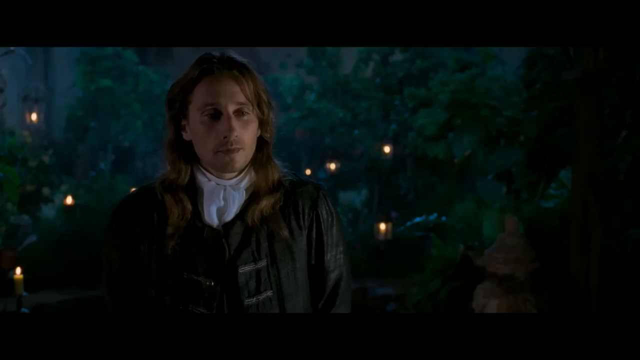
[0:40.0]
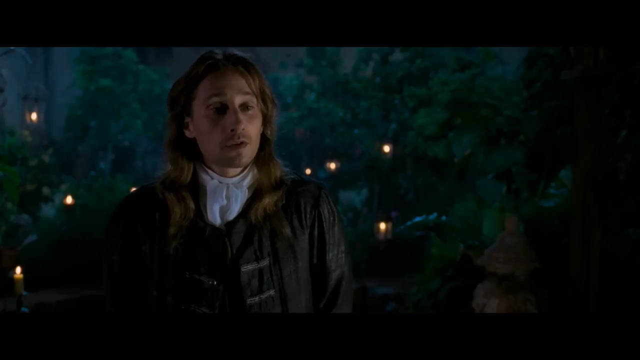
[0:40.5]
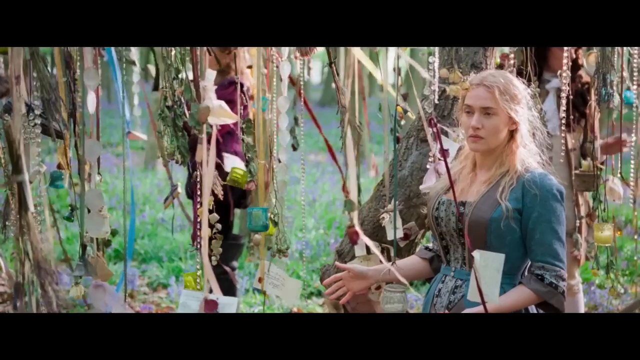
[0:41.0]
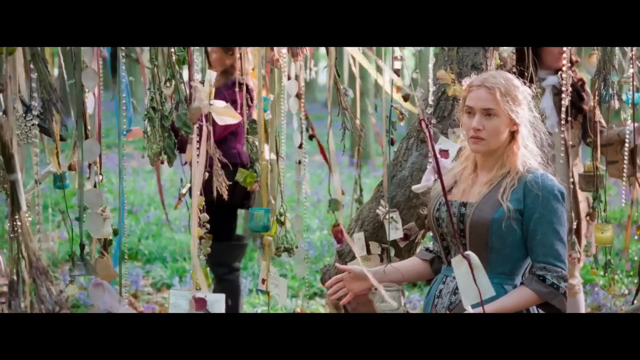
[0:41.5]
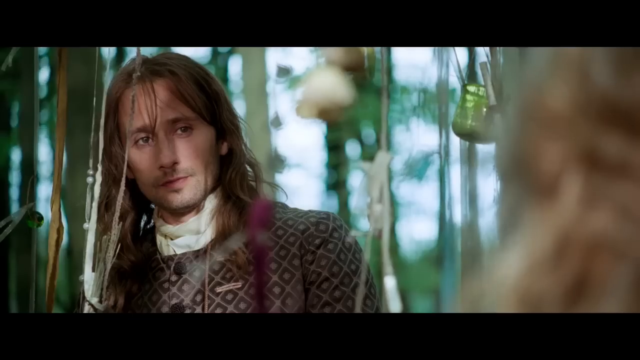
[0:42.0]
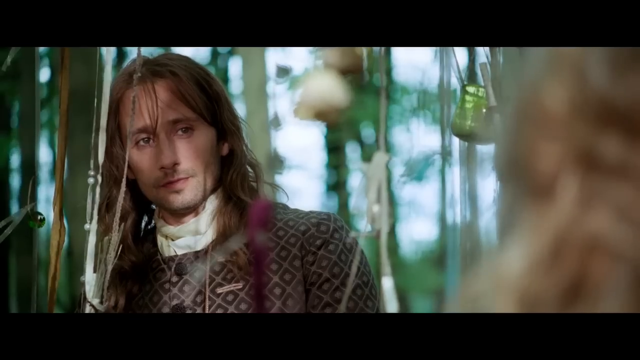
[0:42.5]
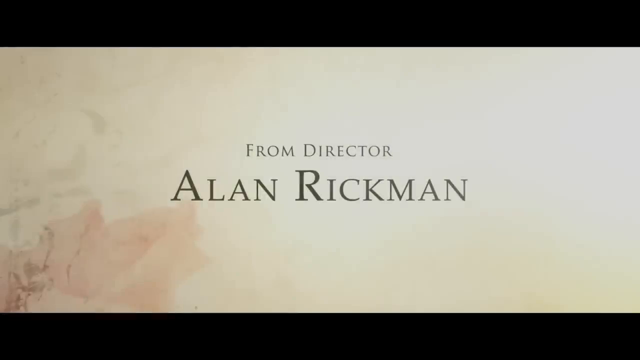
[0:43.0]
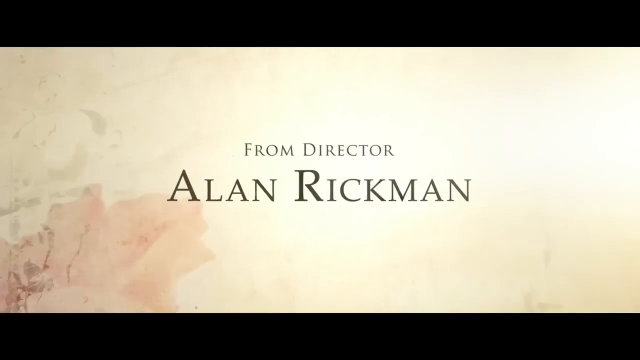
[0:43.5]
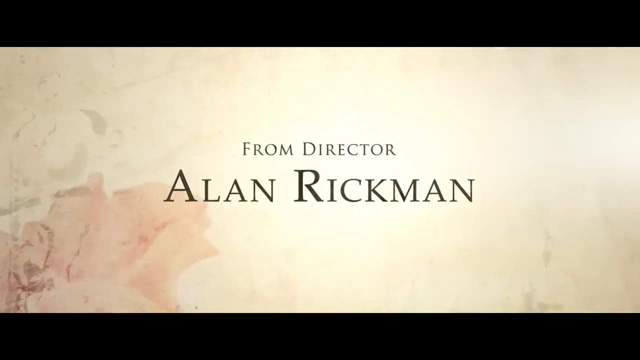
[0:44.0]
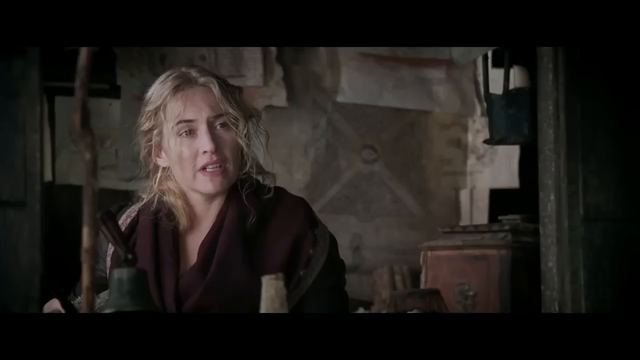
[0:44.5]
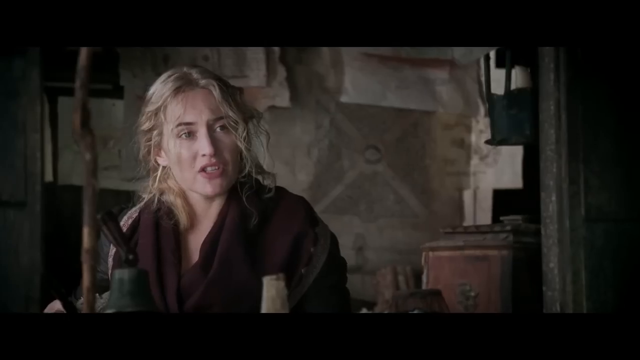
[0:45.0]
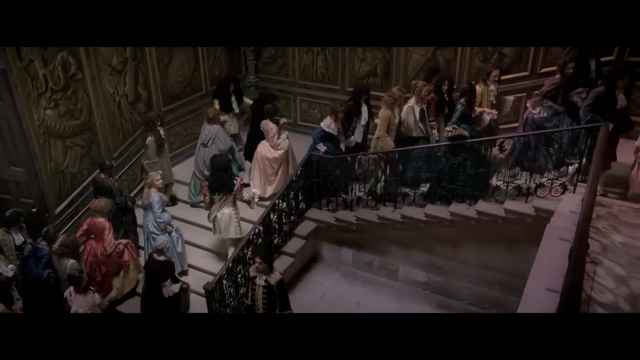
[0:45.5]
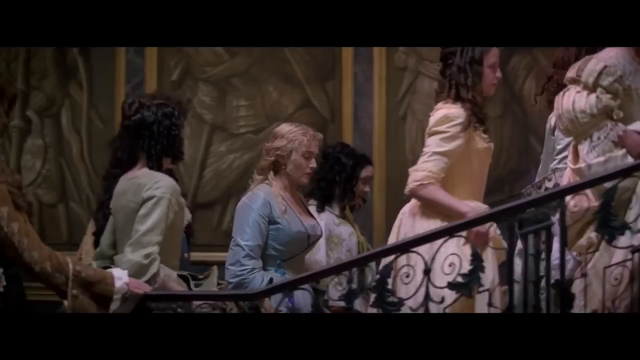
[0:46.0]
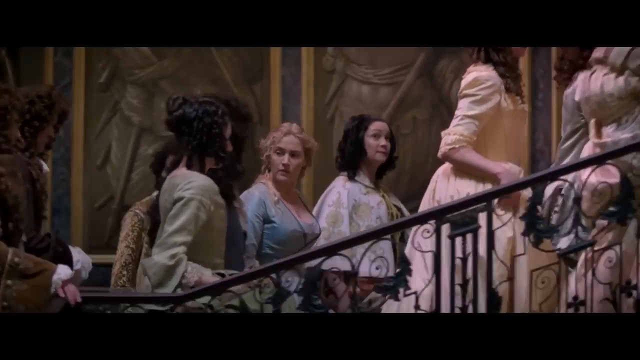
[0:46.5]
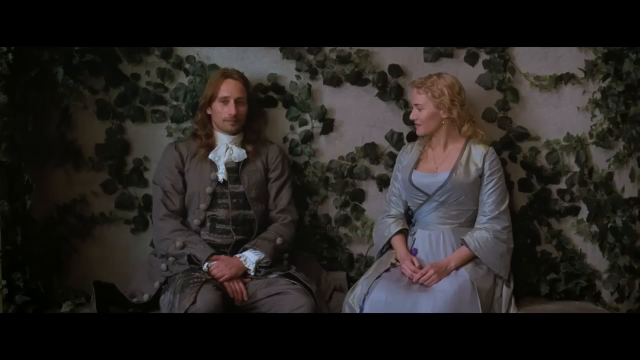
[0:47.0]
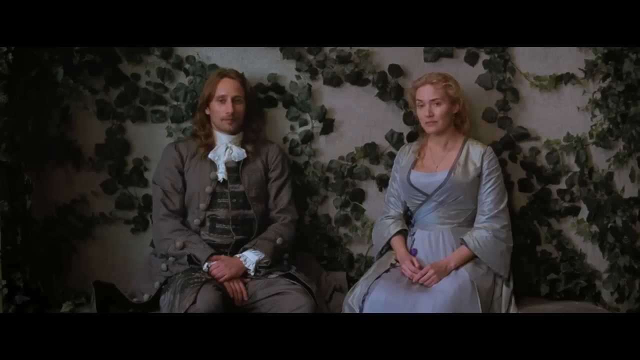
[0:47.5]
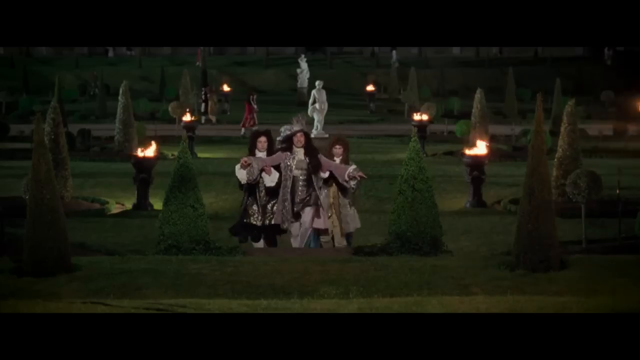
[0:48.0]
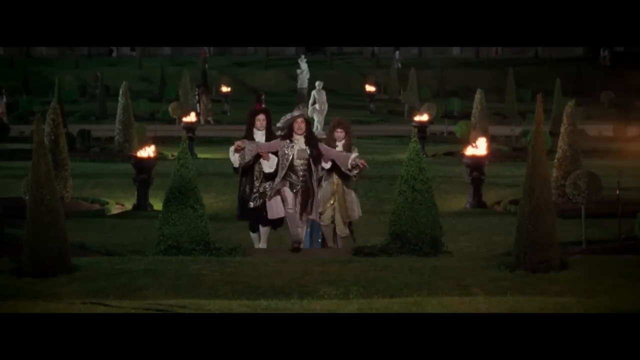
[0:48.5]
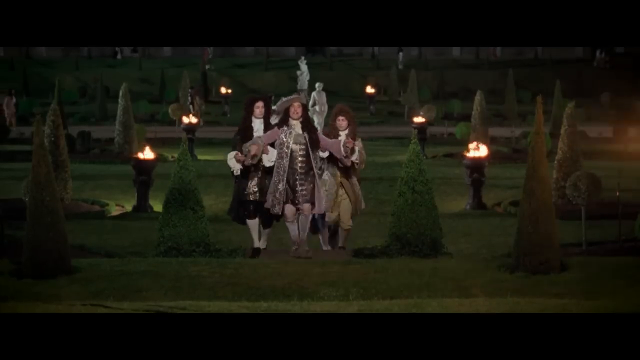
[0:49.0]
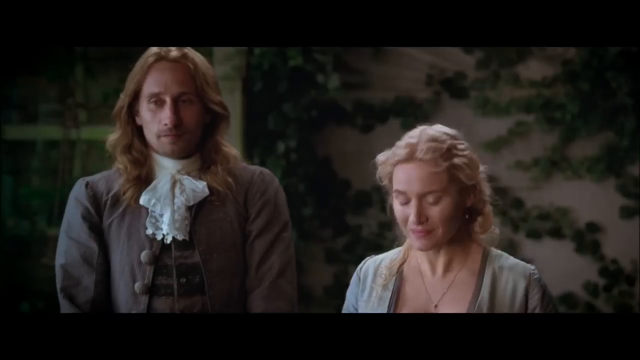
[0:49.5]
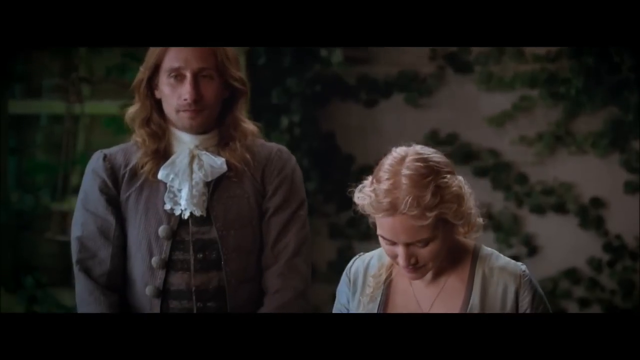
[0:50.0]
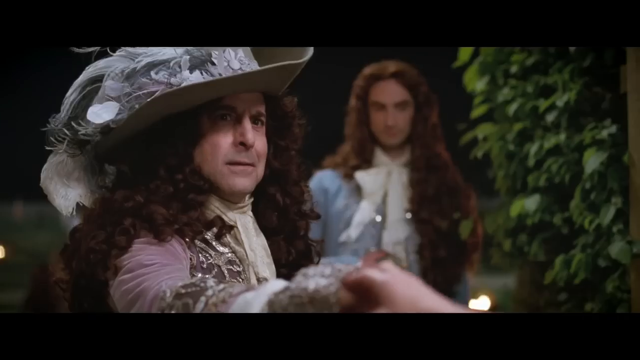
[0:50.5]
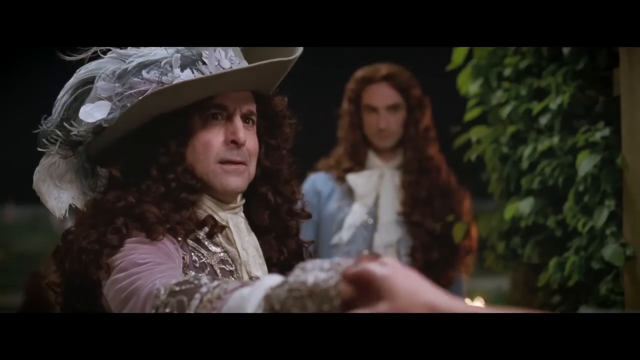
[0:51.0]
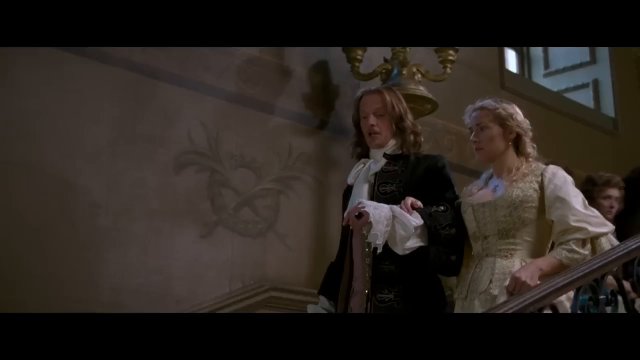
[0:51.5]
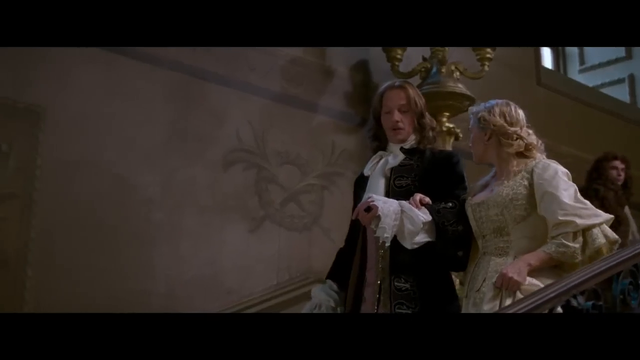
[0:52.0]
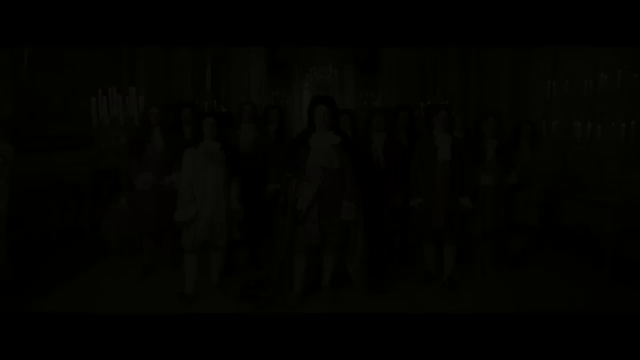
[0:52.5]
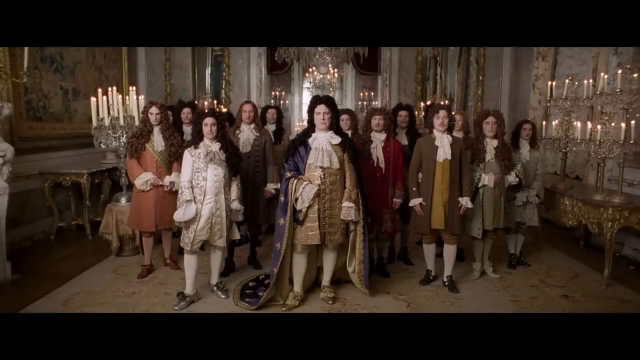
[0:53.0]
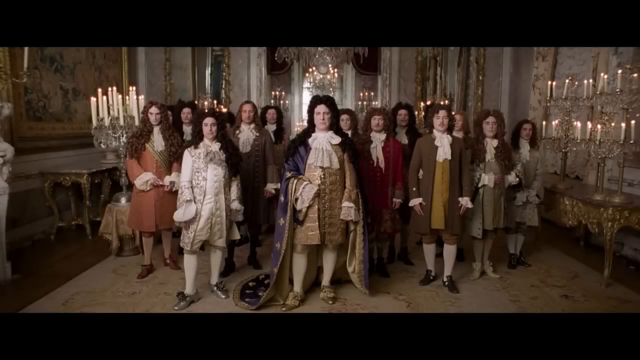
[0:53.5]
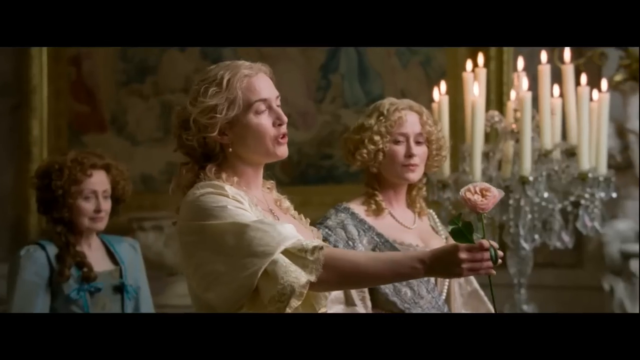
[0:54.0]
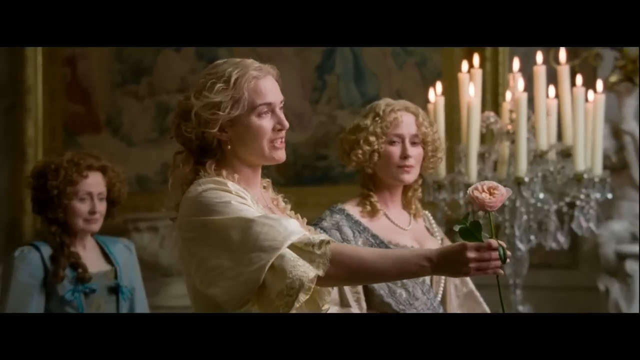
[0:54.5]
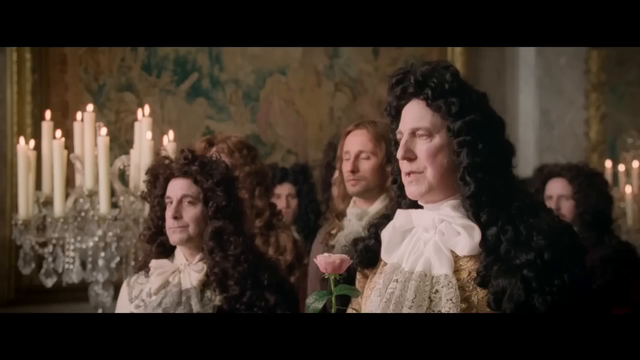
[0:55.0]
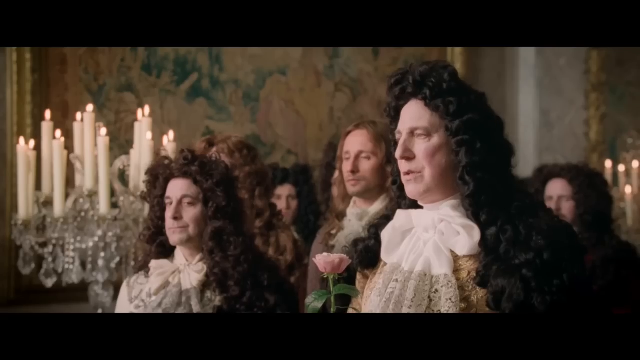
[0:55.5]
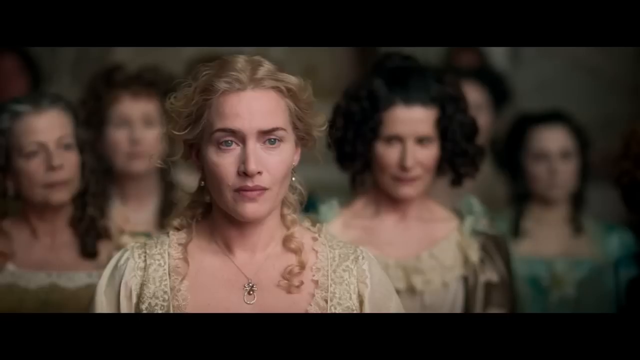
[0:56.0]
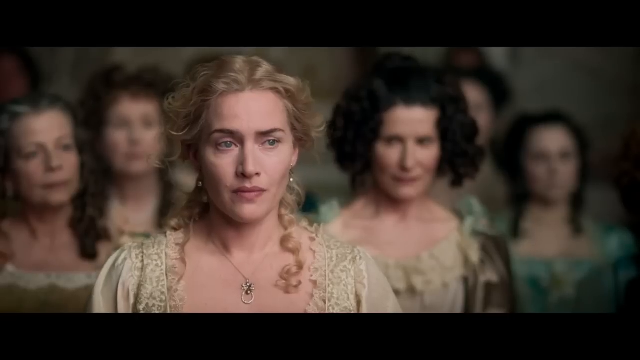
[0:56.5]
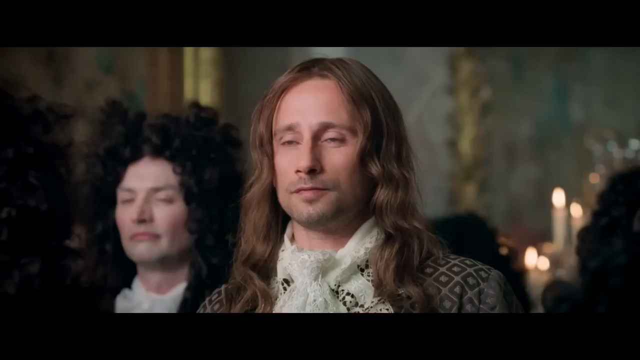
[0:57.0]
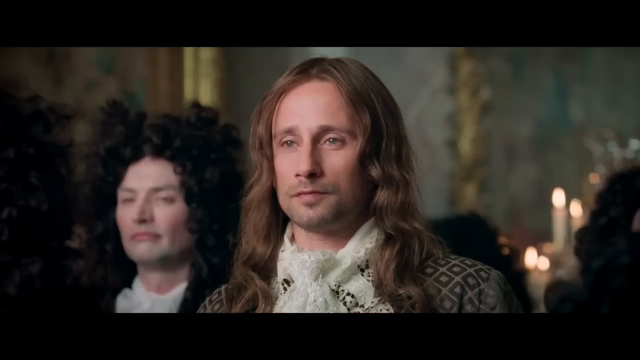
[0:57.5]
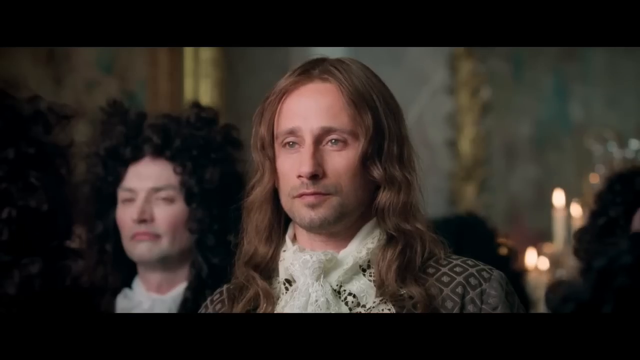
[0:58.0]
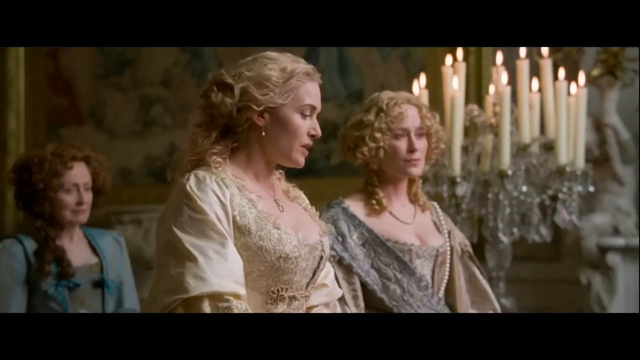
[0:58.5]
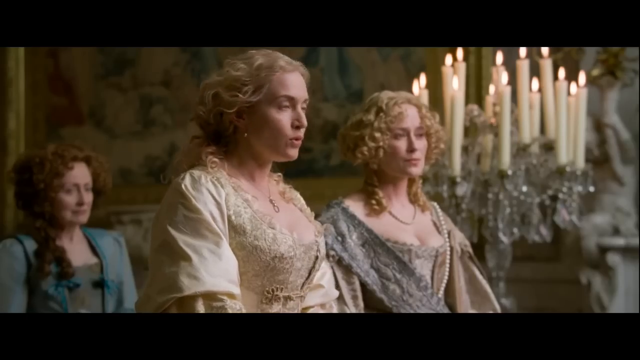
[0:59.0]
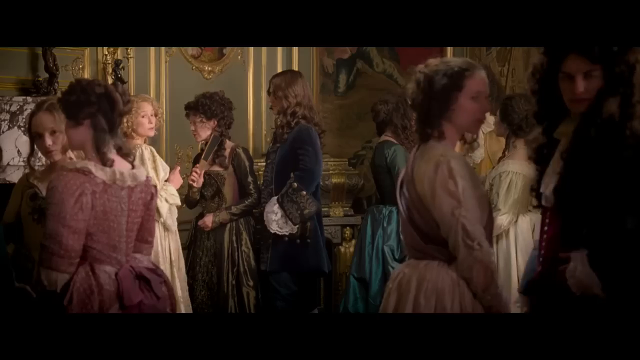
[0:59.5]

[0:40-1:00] A man with brown hair is with a lady in a place with trees that have ribbons all over them. A credit shows the movie was directed by Alan Rickman. A lady talks passionately, people walk, and a girl is on top of some steps. A young man is neatly dressed in 18th-century style, and a lady wears a blue dress that also looks 18th-century. In the background there is a hole with a green edge, and three people run toward two people sitting near that edge. A lady holds a fresh-looking peach rose while another lady stands next to her. She hands a rose to the king; she is not talking to him, and she wears a peach dress. The two seem to be in love.